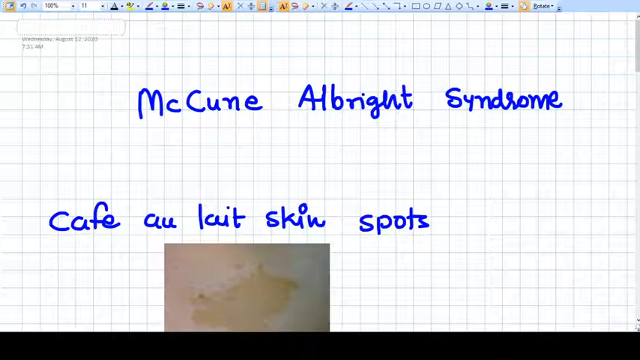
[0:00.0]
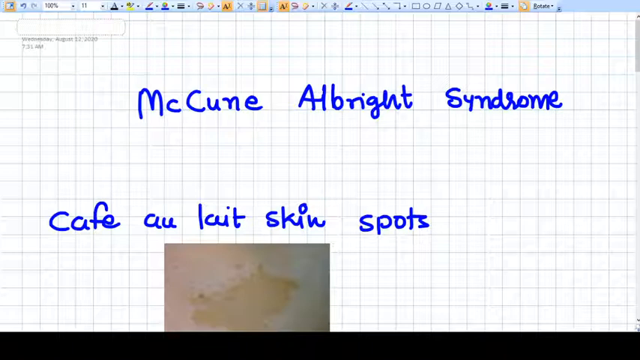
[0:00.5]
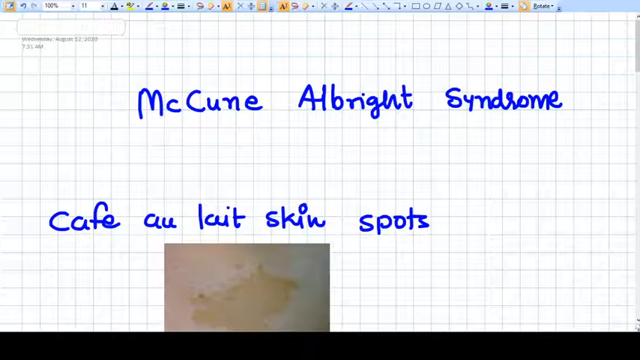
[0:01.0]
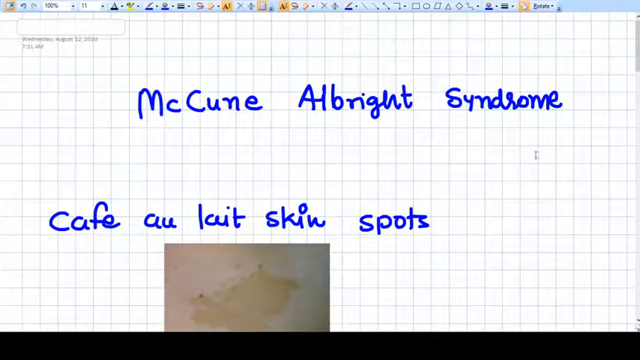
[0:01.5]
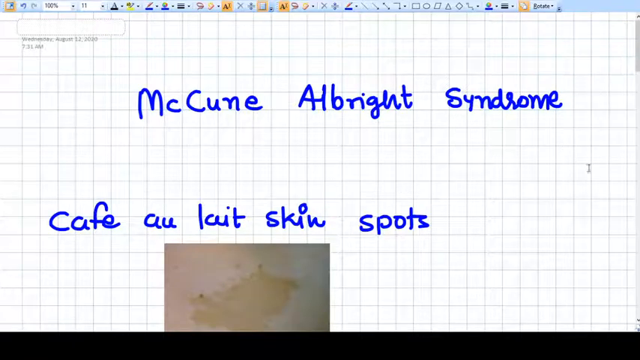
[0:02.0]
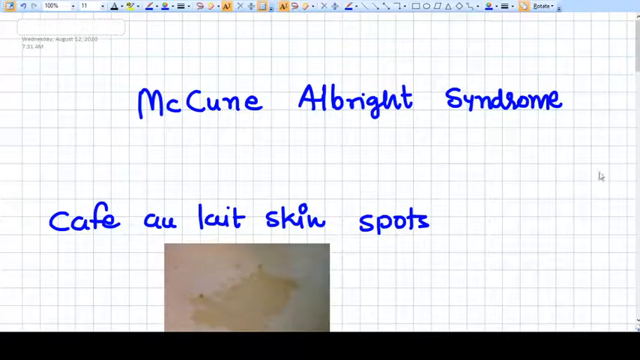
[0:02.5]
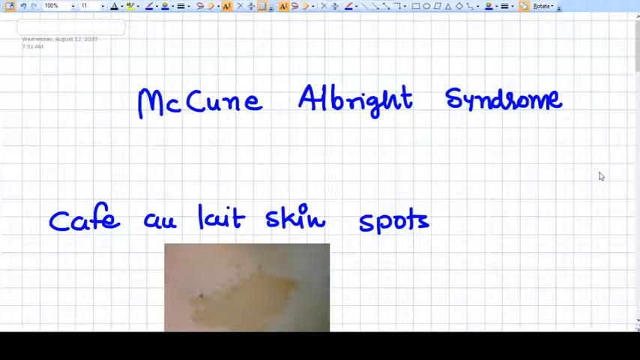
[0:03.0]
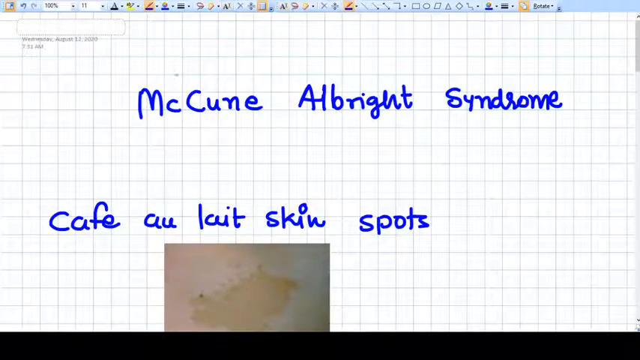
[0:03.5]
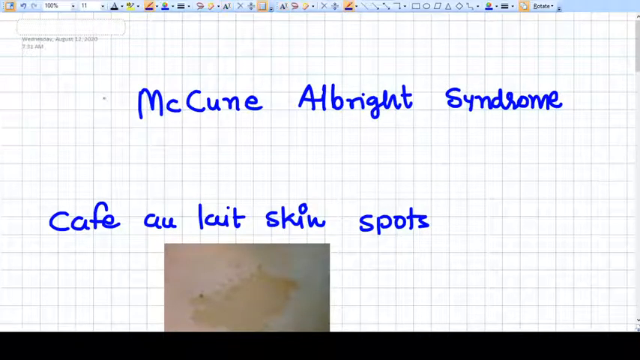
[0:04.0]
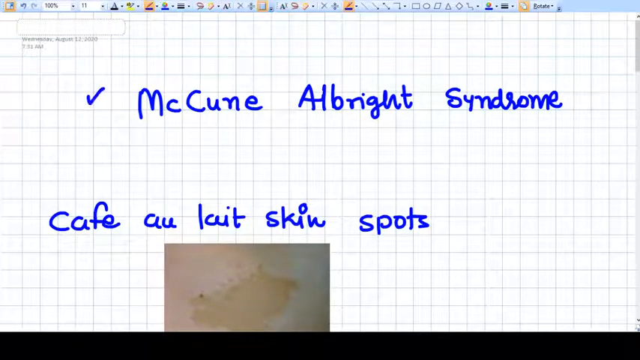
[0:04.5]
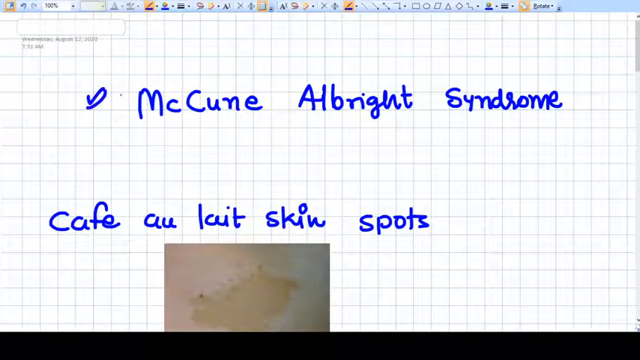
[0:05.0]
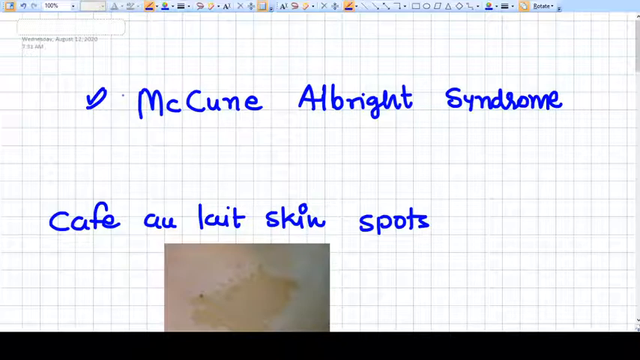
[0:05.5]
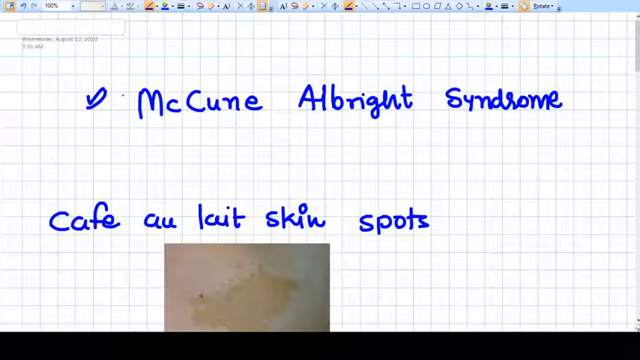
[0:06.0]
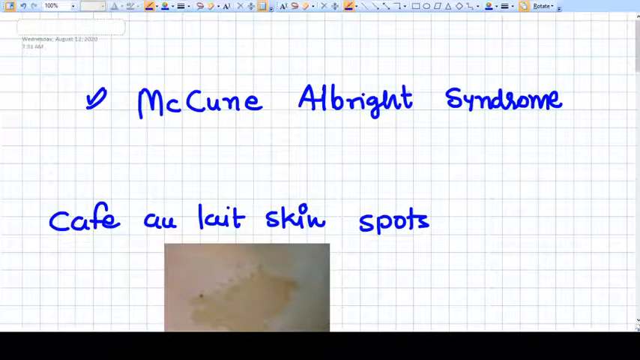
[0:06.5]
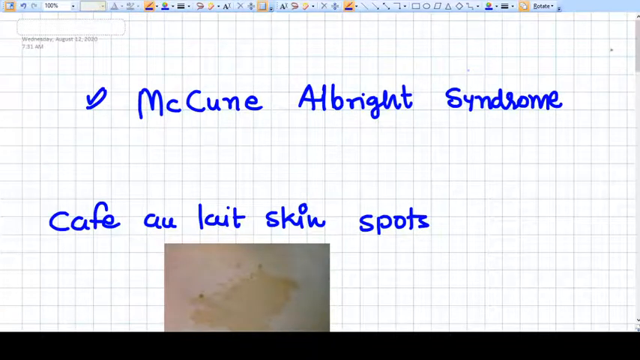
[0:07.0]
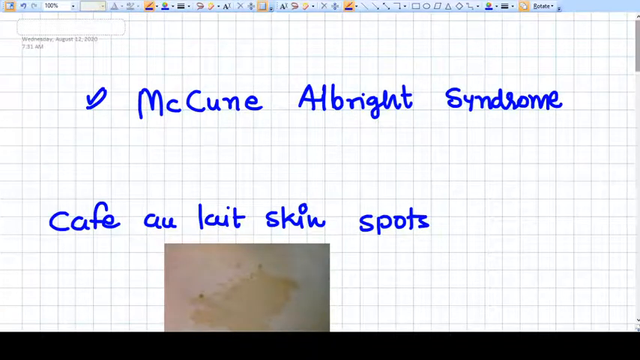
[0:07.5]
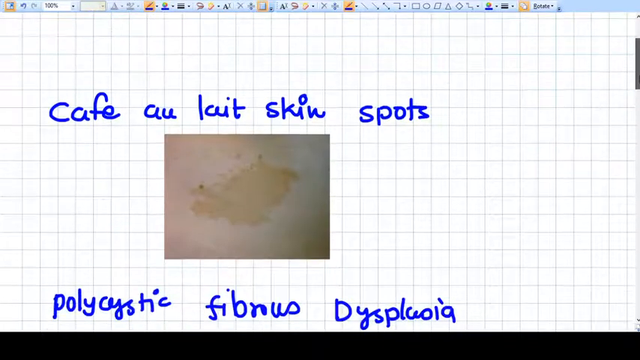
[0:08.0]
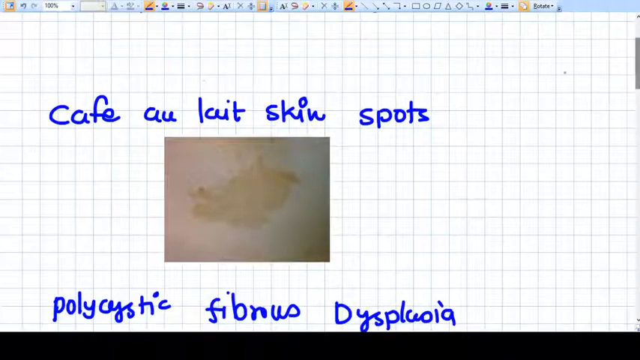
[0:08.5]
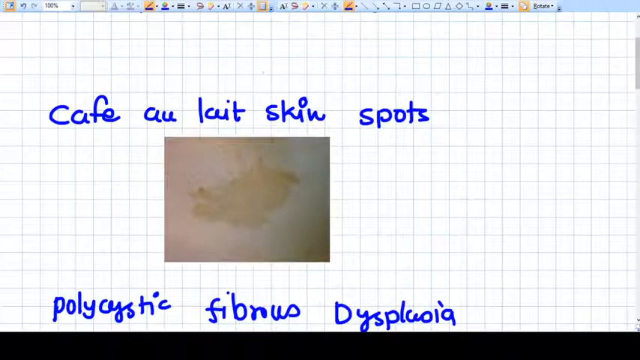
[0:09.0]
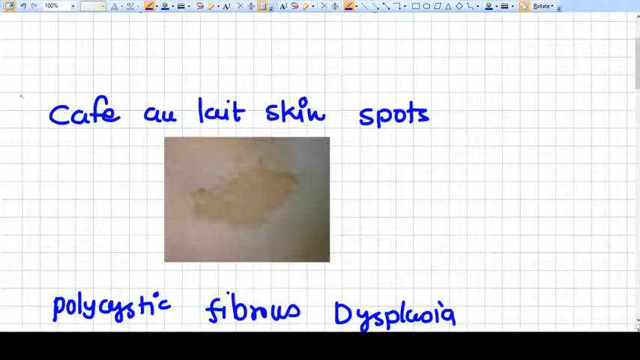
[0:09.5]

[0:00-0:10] Text is written on what looks like graph paper covered in little white squares. Along the top are options such as drop down, color select, a text or draw tool, select tools, angles and shapes. The text looks like a handwritten style and reads "McCune-Albright syndrome" and "cafe a la skin spots." A real photograph follows, showing a Caucasian person's skin with darker brown blotches on it, looking as if someone vomited on that spot, with a number of smaller dots around it. The user scrolls down and more text appears below, reading "polycystic fibrous dysplasia."